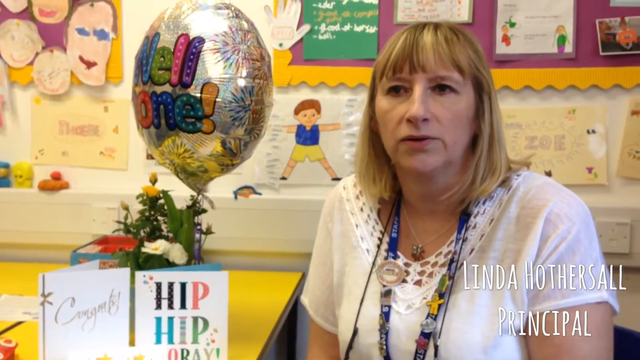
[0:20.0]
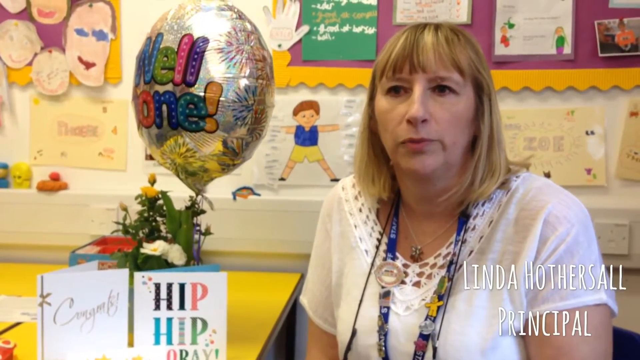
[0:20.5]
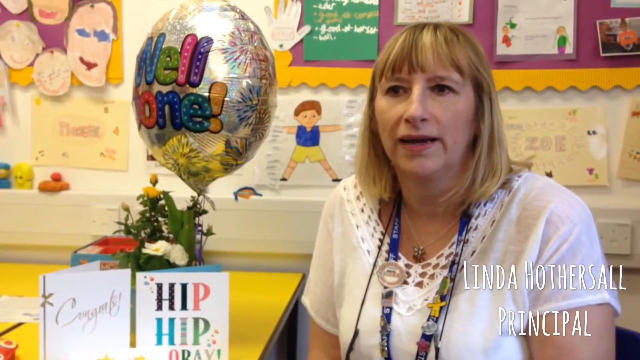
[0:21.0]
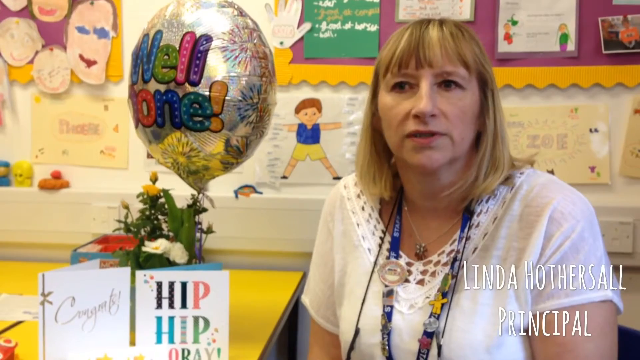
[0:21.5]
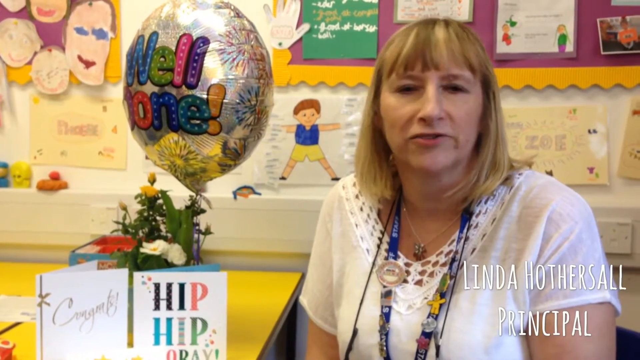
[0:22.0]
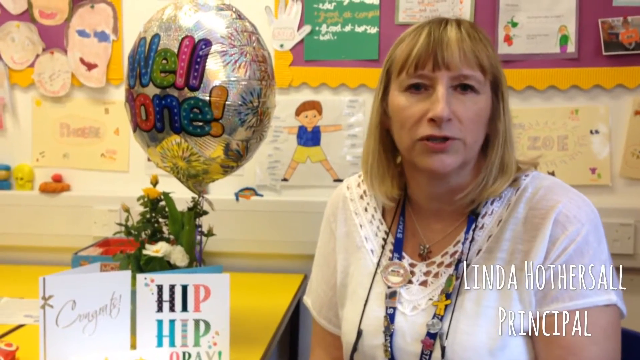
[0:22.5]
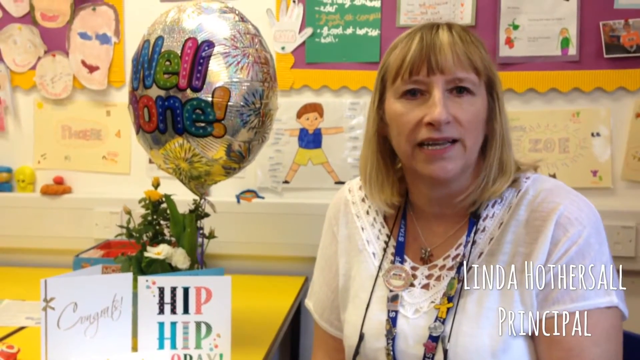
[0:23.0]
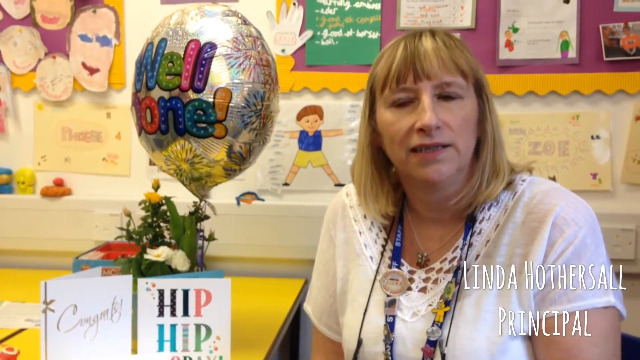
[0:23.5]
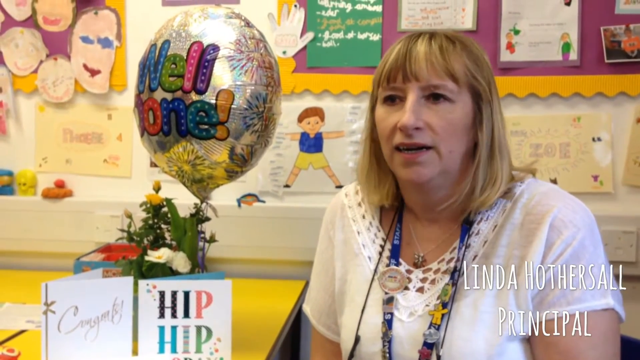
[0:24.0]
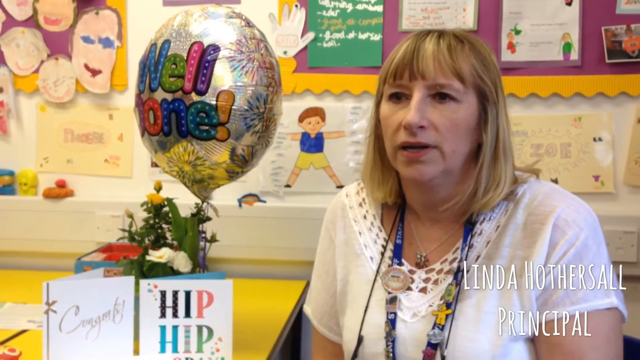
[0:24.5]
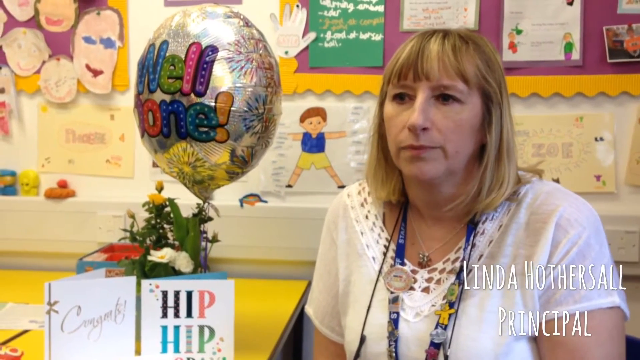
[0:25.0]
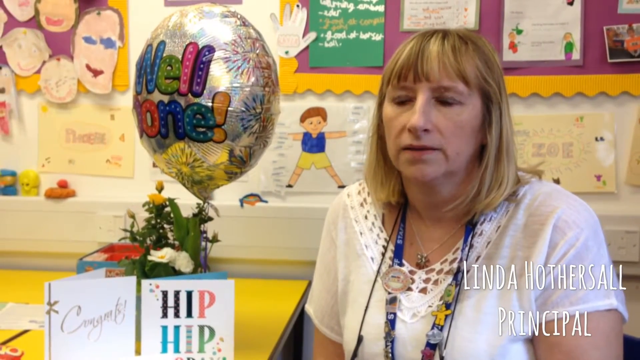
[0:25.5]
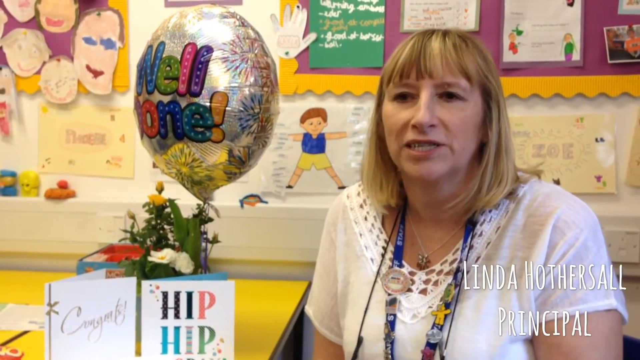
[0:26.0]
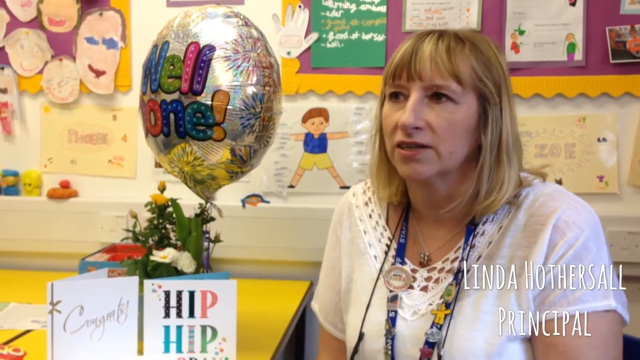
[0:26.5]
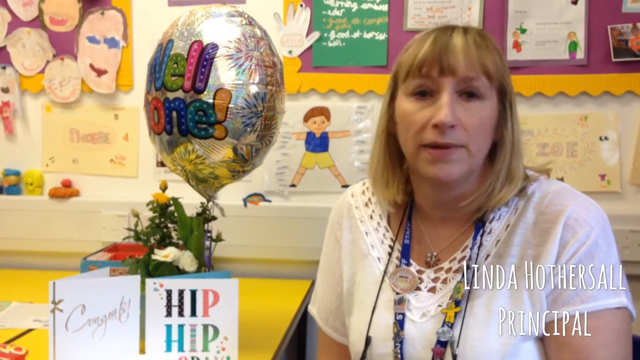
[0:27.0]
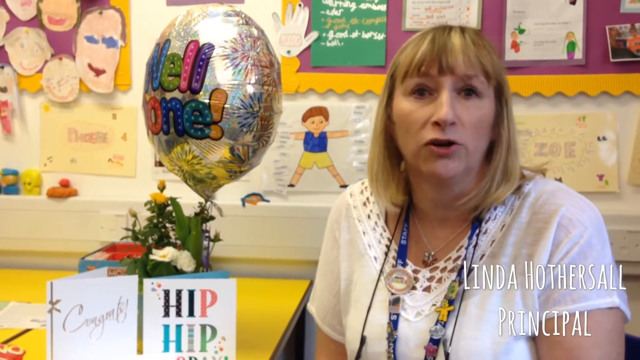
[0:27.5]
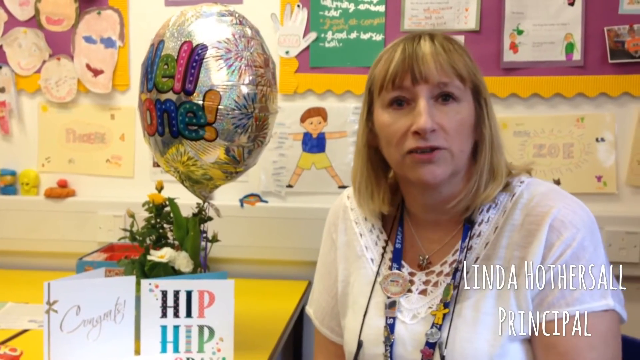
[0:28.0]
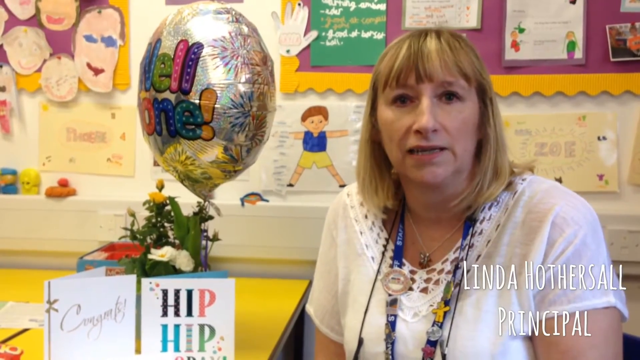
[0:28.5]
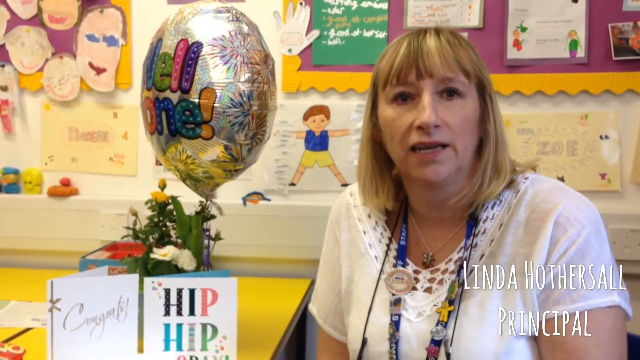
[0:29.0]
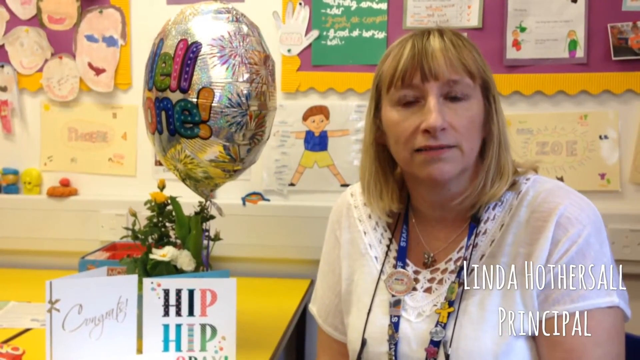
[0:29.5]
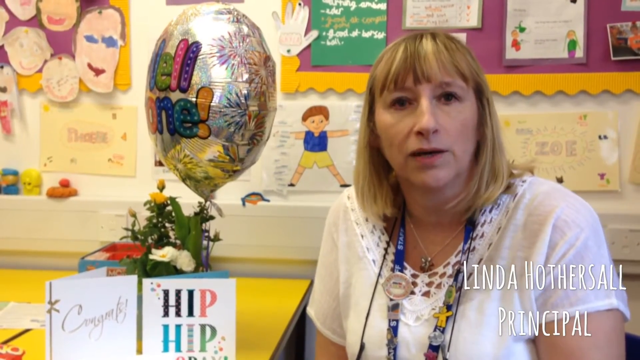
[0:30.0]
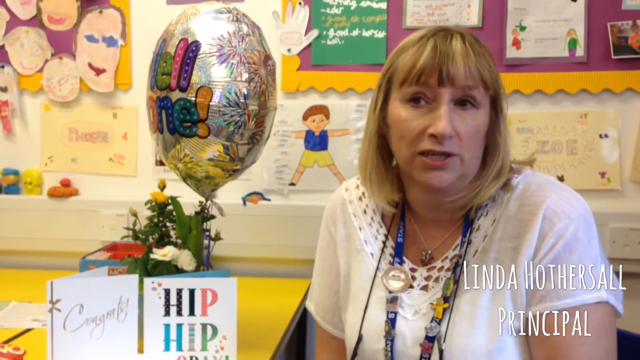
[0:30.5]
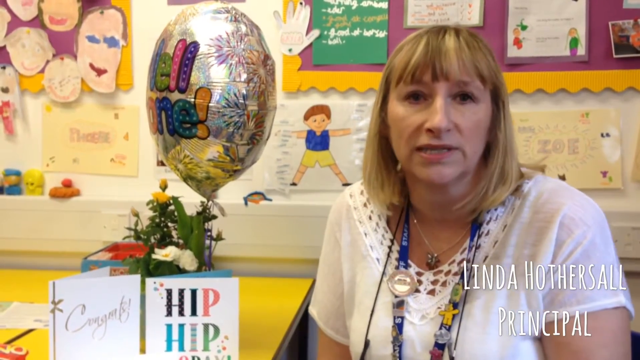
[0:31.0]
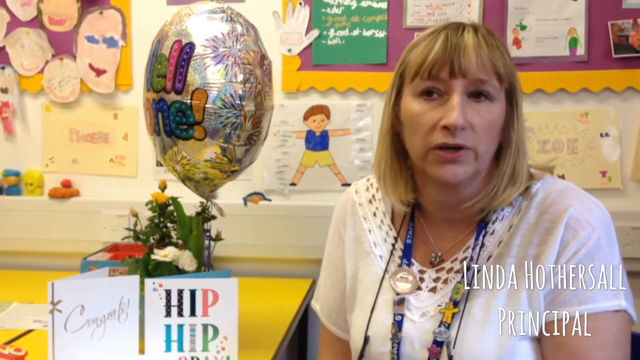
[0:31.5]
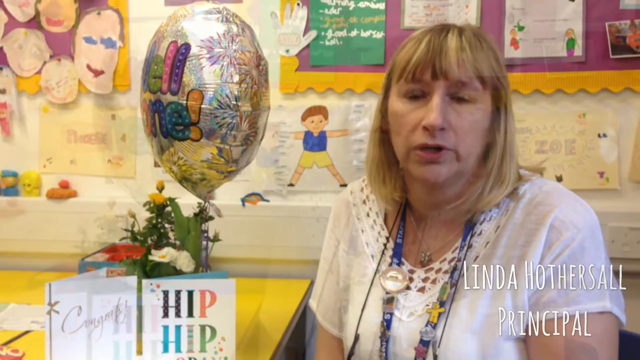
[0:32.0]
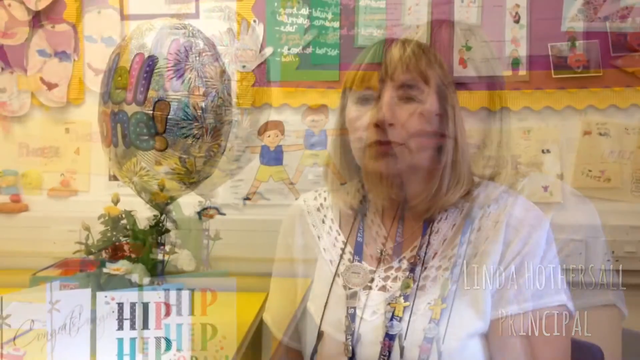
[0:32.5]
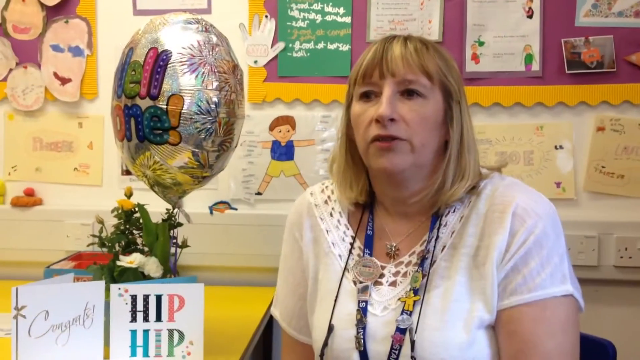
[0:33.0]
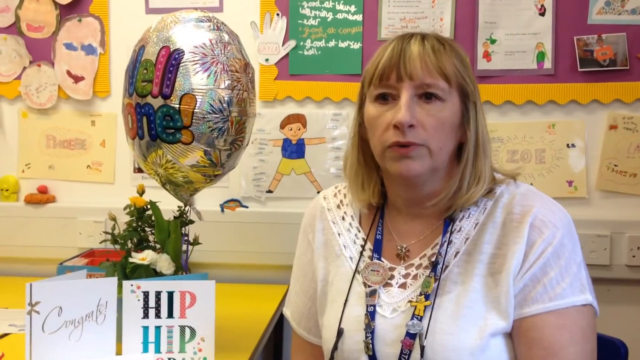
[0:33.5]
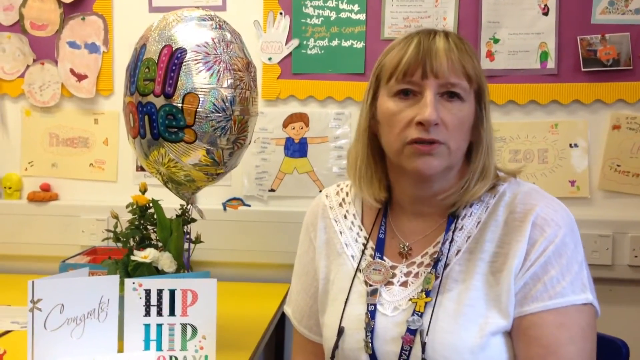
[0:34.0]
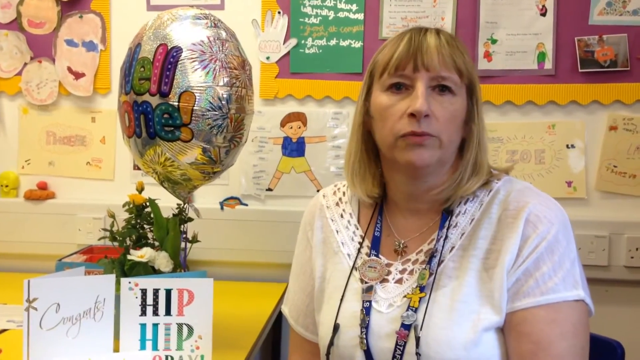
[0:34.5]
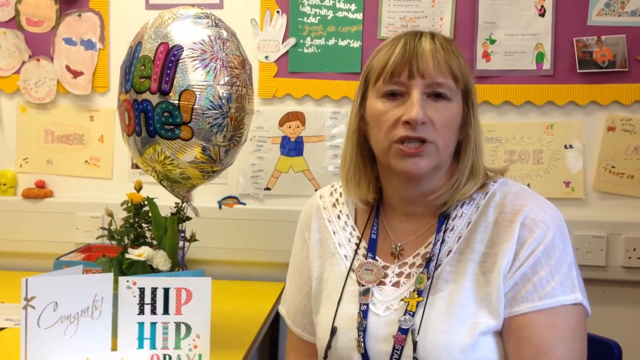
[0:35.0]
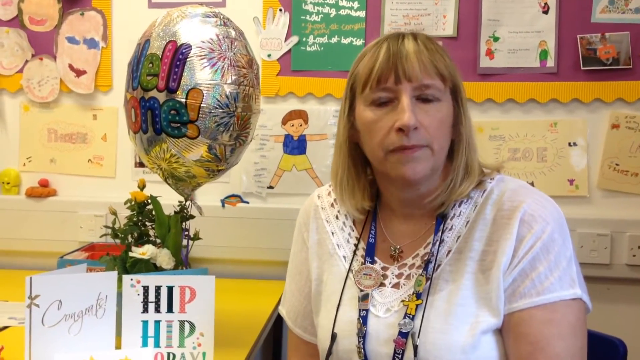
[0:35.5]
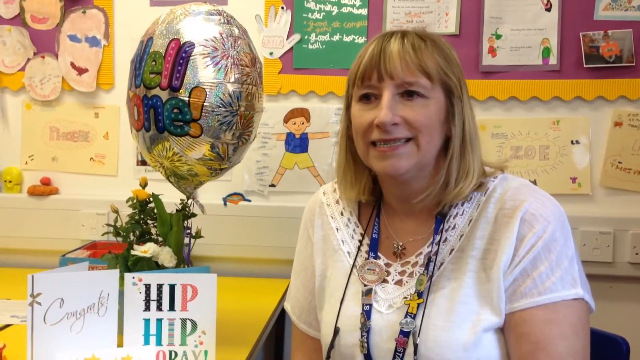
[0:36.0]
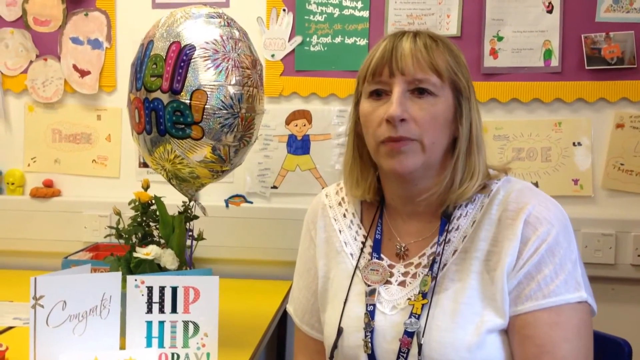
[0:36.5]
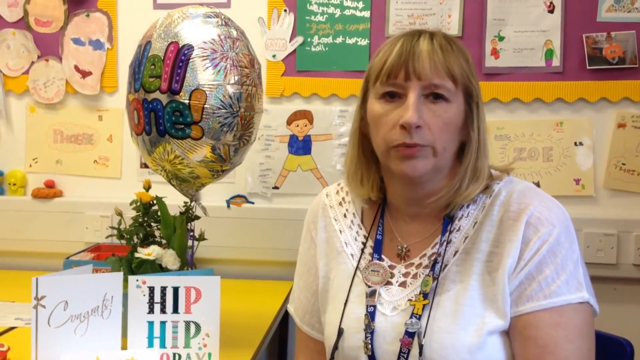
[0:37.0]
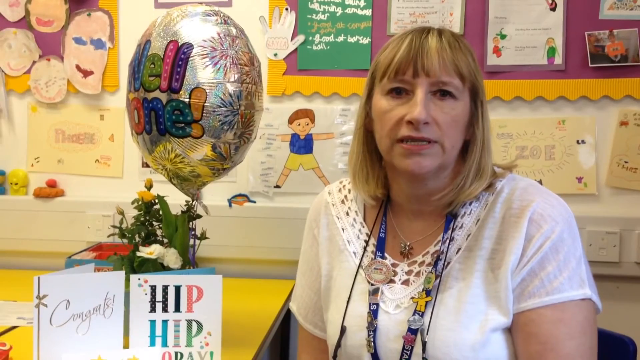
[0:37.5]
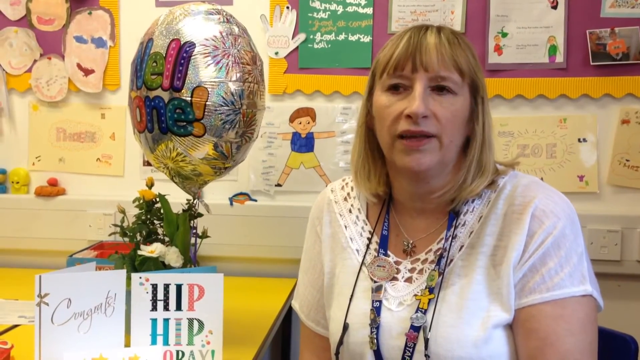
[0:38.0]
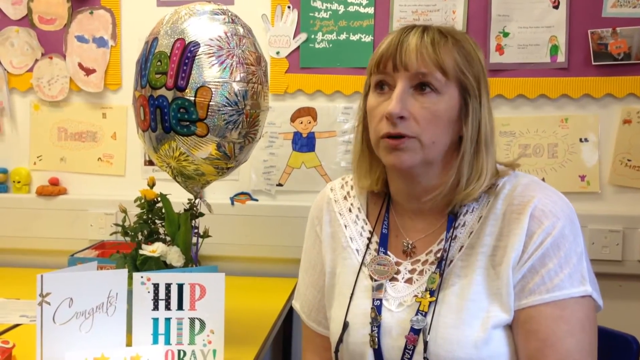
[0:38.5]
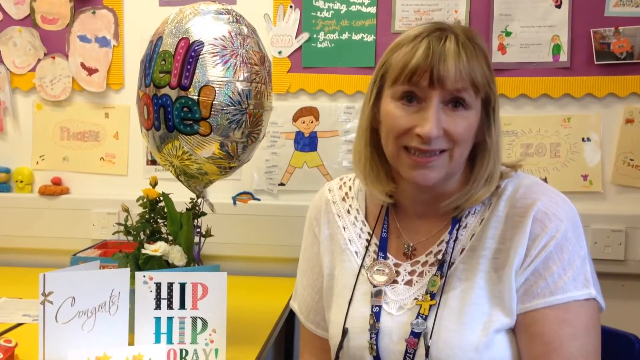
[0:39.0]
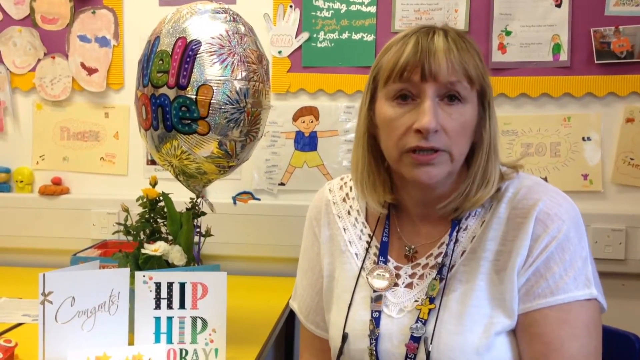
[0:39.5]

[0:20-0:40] A teacher is in a classroom; text in the bottom right corner gives her name as "Linda Hothersall" with "Principal" underneath. She is just right of center, with blonde hair, short bangs and hair down to her shoulders, and a white short-sleeved shirt that is kind of frilly around the neckline, which plunges down a little. A blue laminate hangs around her neck. To her left, on her desk, are a couple of cards, some flowers and a big silver balloon that says "well done" in various colors. Papers are stuck on the board behind her, apparently cards the kids made for her. The cards on the left are on a yellow table. She looks forward and slightly to the left as she talks, shaking her head a little, smiling now and then, and moving and shrugging her shoulders slightly. The camera almost fades out for a second and then comes right back. Still talking, she looks directly at the camera, glances off to the left and looks straight back. Of the cards on her desk, the one on the left says "congratulations" and the one on the right says "hip hip hooray".